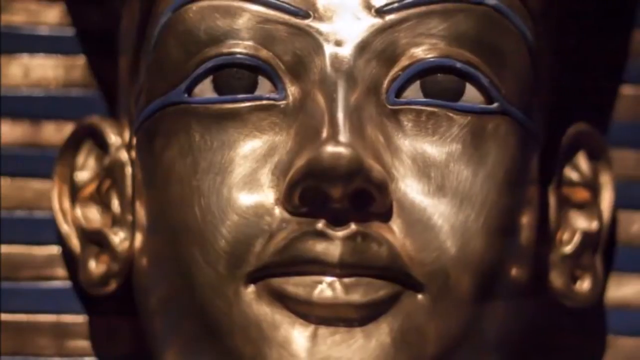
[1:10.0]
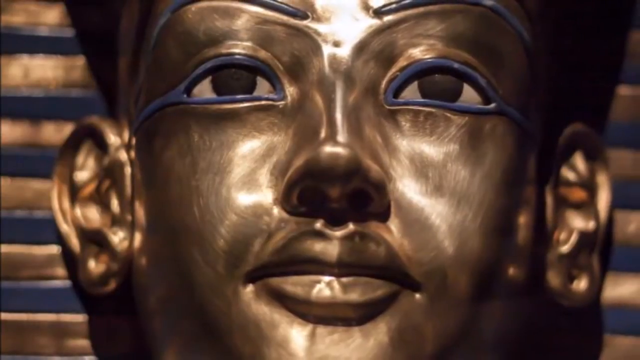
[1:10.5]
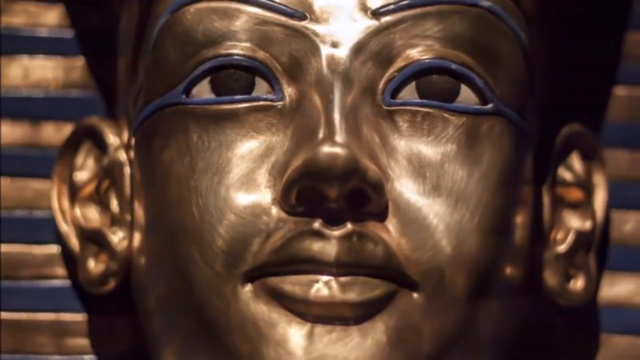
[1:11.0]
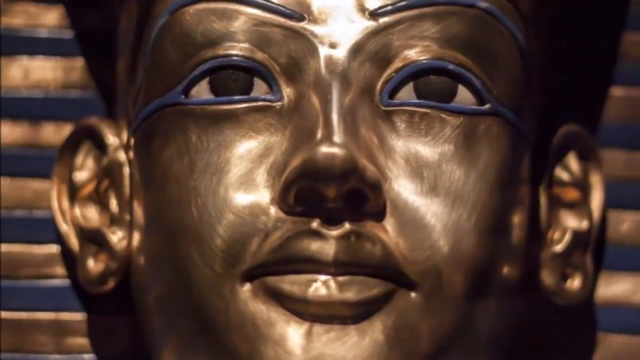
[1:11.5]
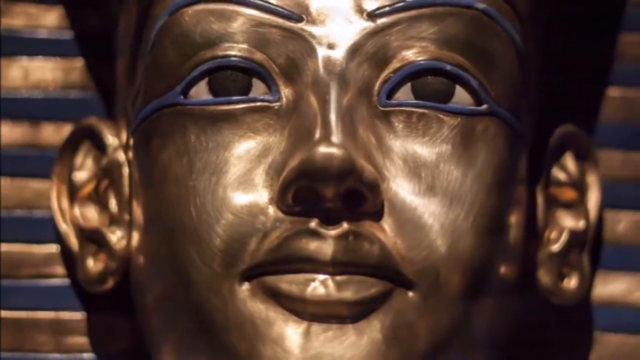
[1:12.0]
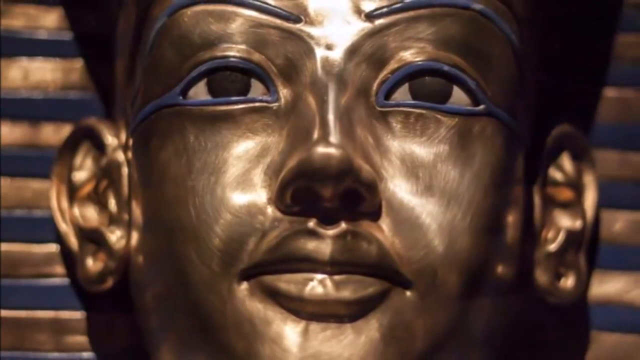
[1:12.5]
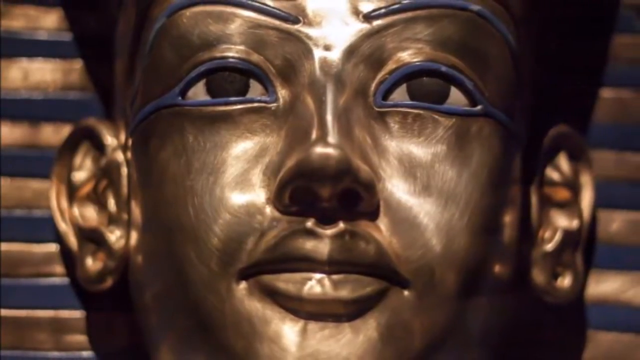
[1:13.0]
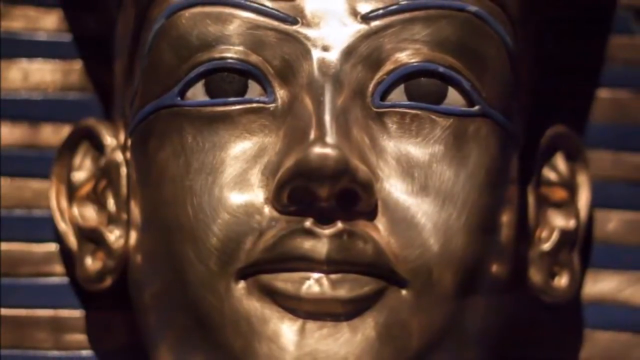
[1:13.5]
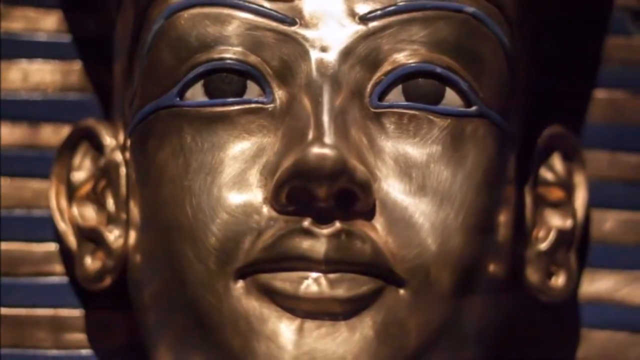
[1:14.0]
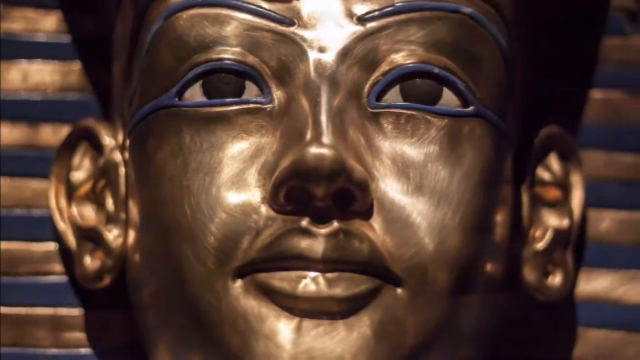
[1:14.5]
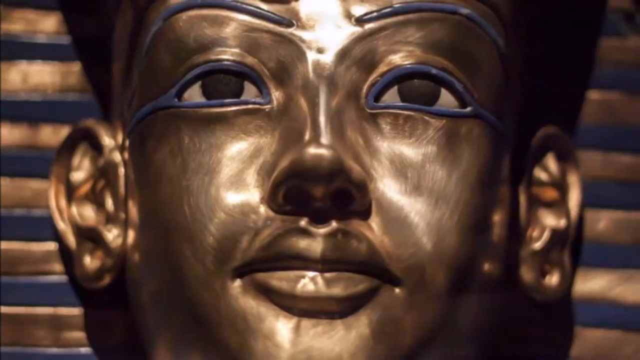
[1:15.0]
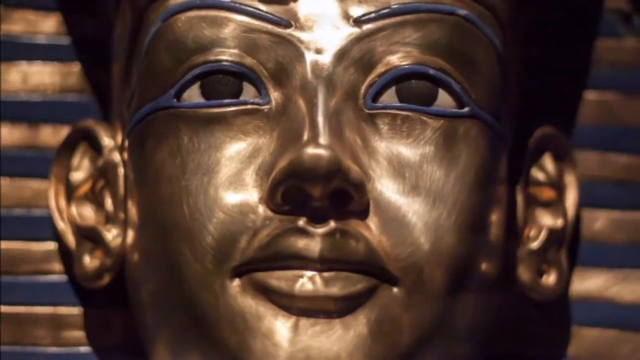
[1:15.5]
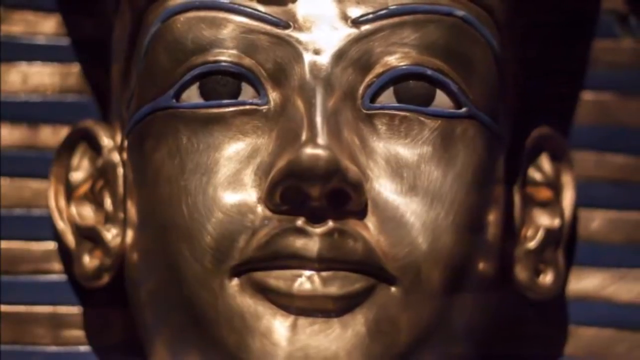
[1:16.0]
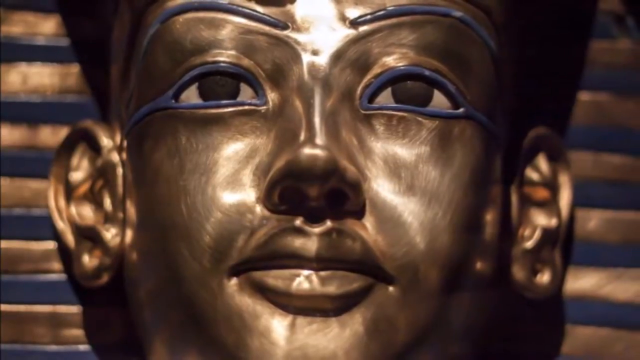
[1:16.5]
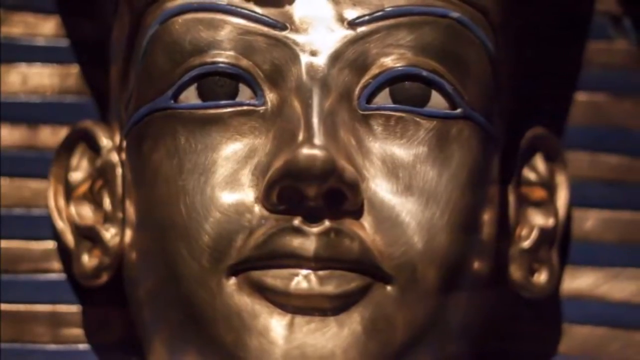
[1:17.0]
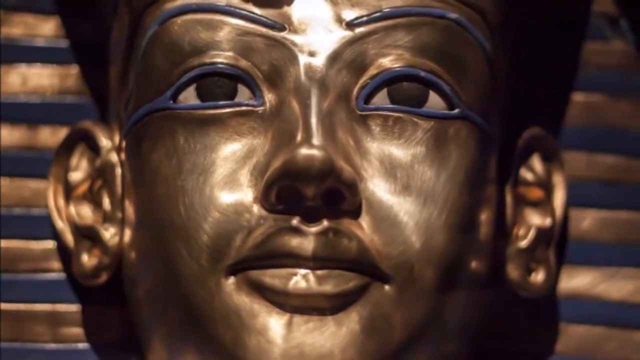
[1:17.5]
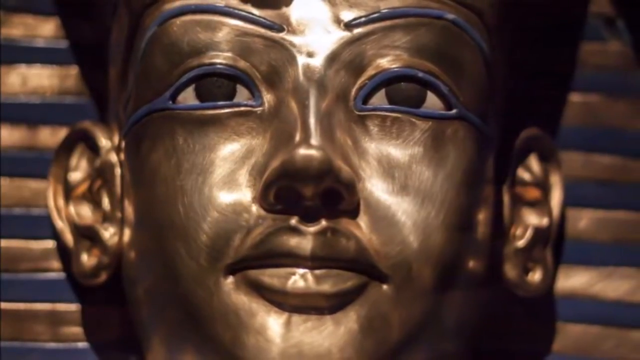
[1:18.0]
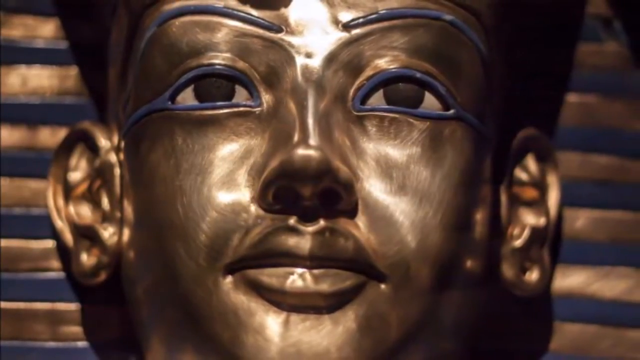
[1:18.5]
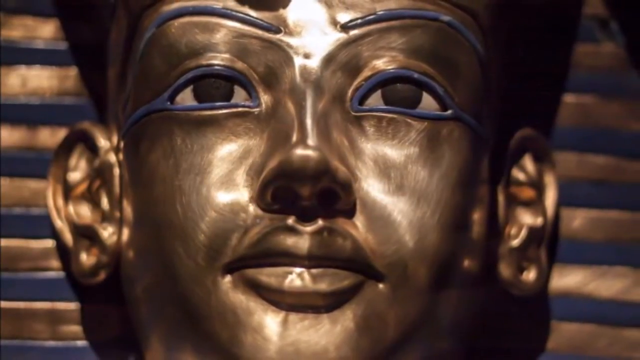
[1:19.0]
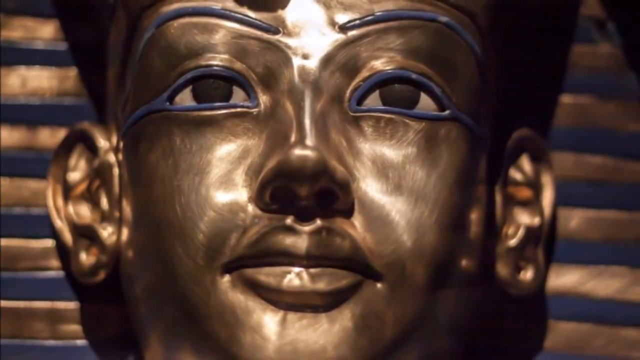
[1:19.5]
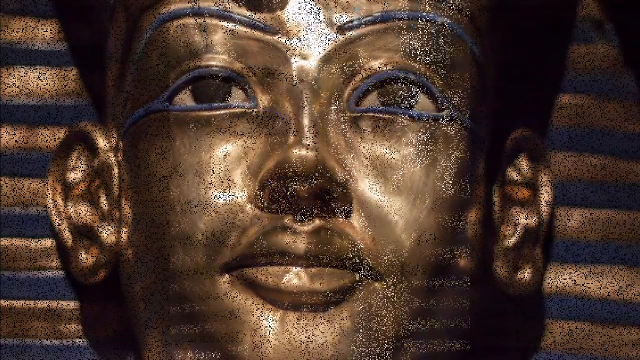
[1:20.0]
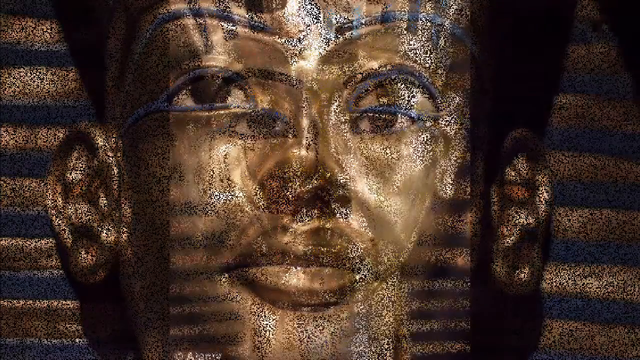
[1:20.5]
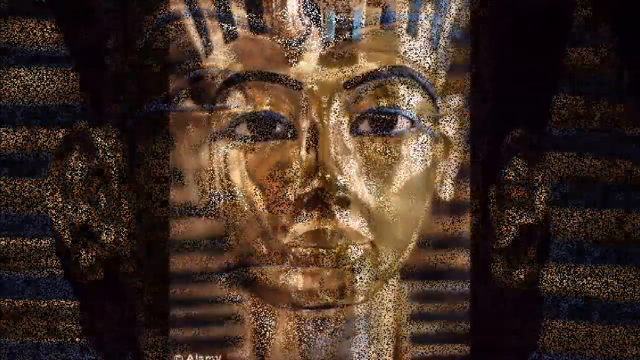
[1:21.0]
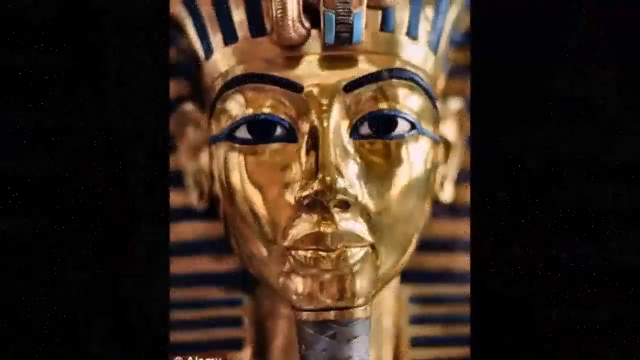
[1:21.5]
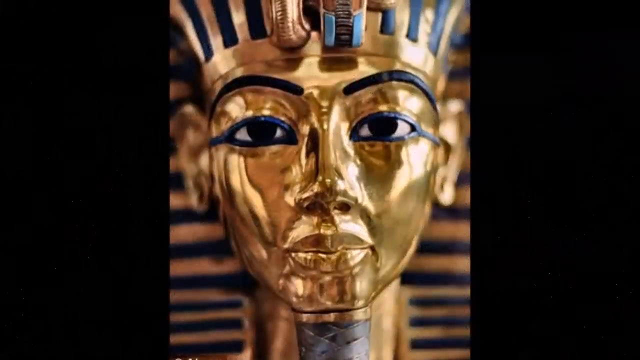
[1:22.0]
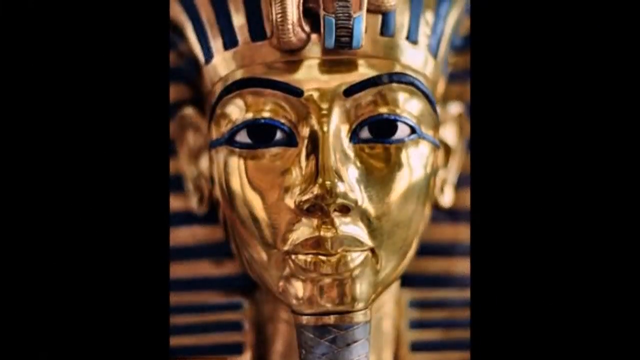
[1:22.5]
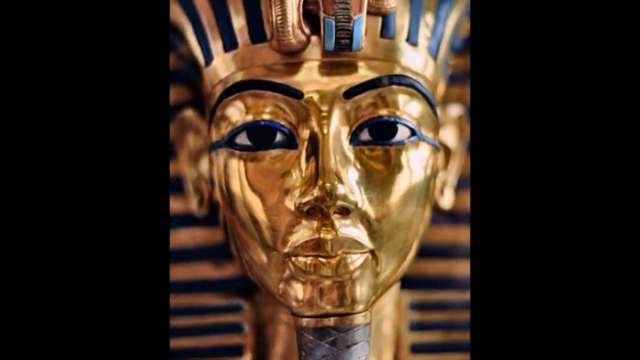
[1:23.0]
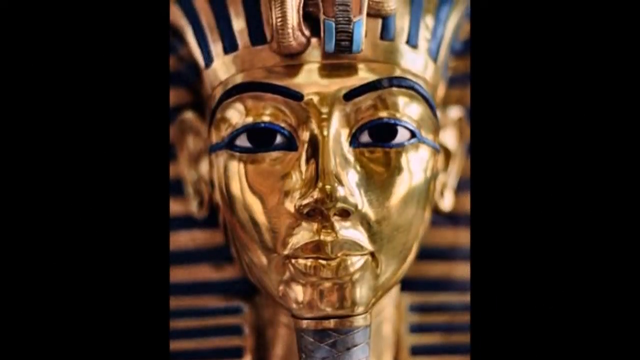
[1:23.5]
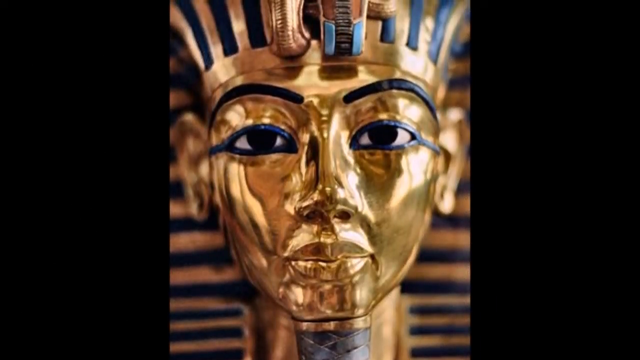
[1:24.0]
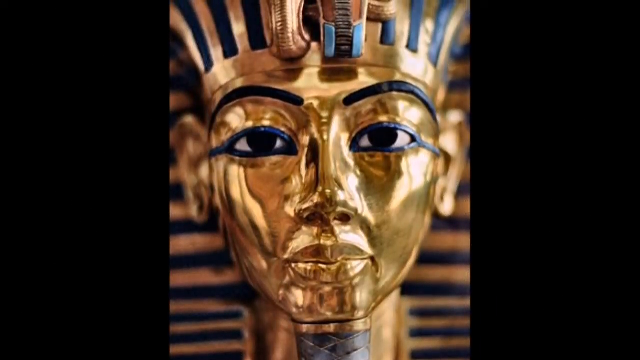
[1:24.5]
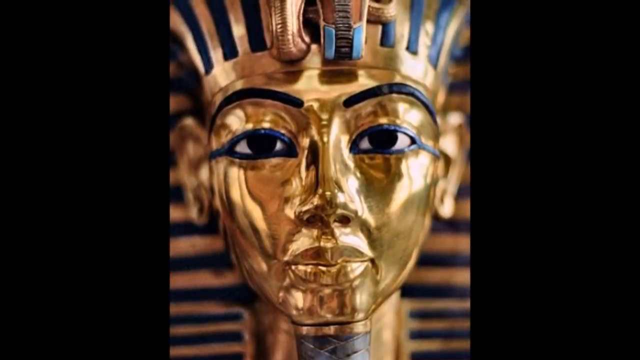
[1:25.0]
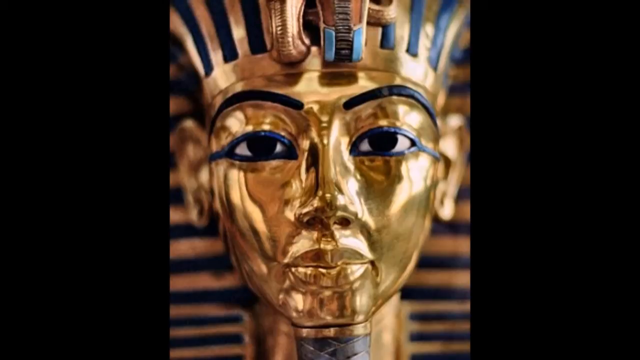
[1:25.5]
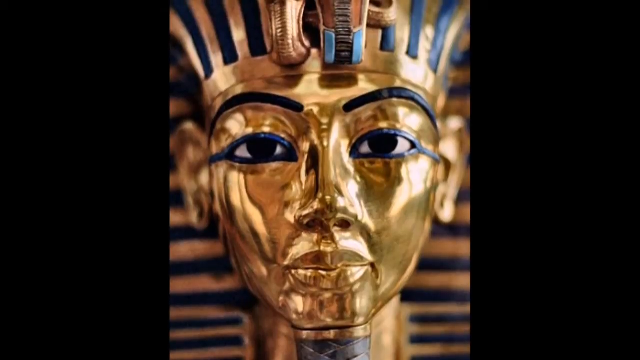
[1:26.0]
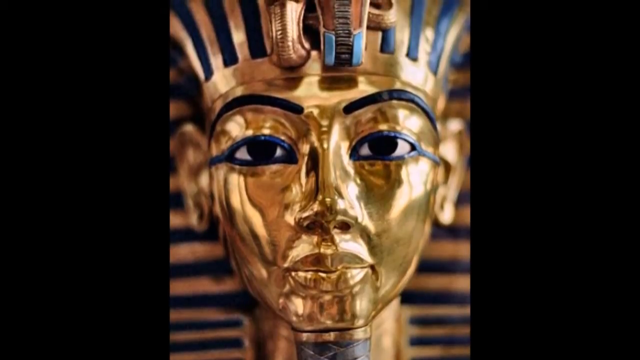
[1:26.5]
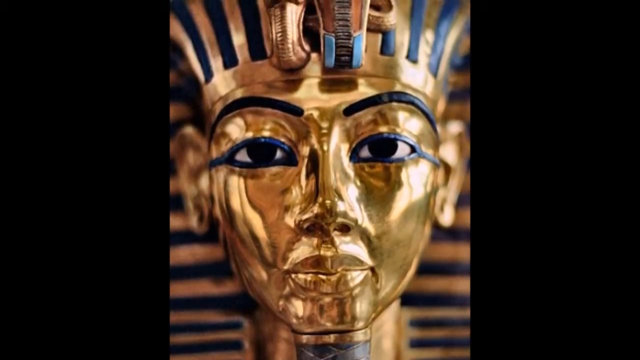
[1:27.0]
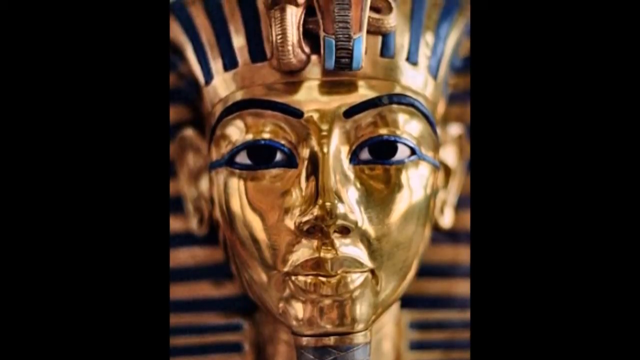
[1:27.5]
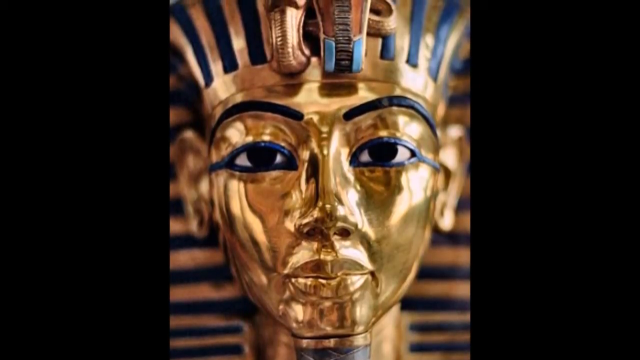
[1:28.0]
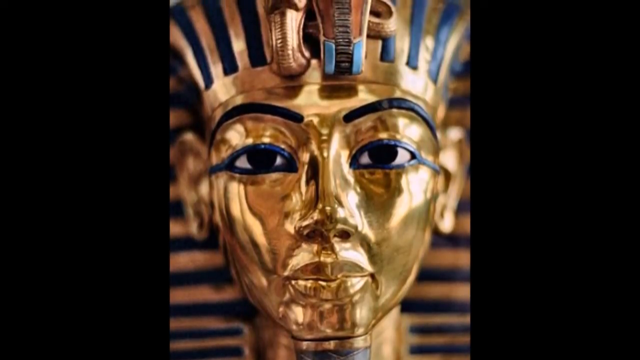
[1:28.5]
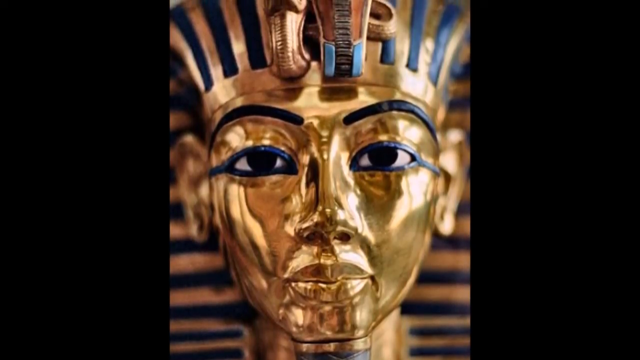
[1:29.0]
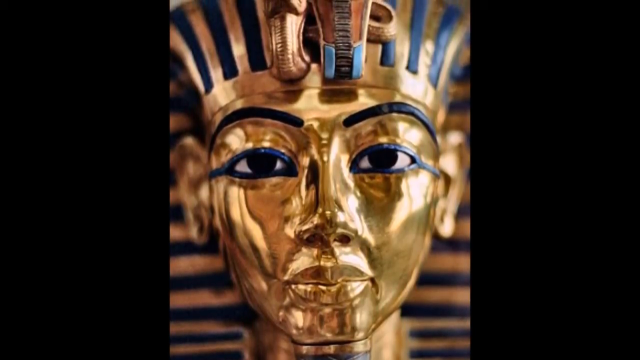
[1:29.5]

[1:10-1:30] A zoomed-in view shows the face of King Tutankhamen's tomb: the eyes with a blue outline and black pupils, the nose and nostrils, and the lips. The chin and forehead are not visible, but the ears and the horizontal blue and golden lines in the background are. The video pans to the right and zooms out a bit, revealing more of the gold face and the horizontal blue and yellow lines. The image turns grainy and transitions to a shinier version of King Tut's tomb face, shiny reflective gold with blue eyelashes and blue eyeliner. The video pans upward, slowly revealing his forehead, the two snakes on it, and the horizontal lines behind him.